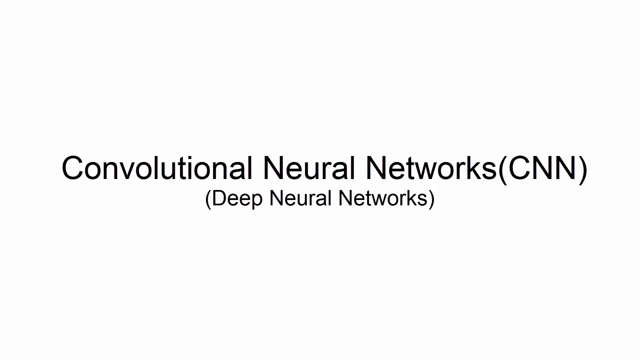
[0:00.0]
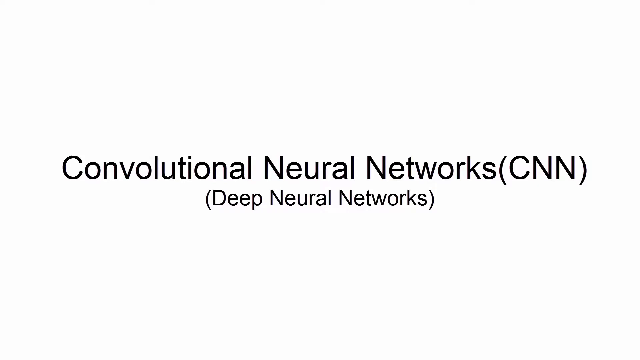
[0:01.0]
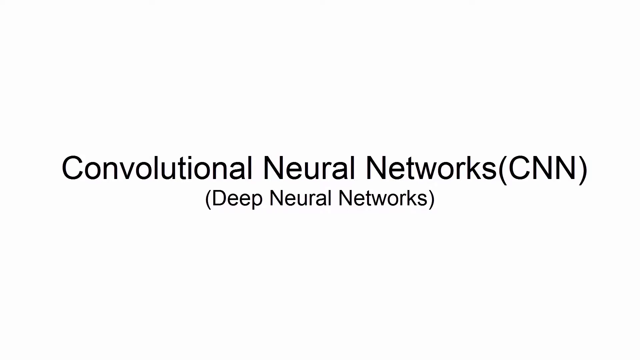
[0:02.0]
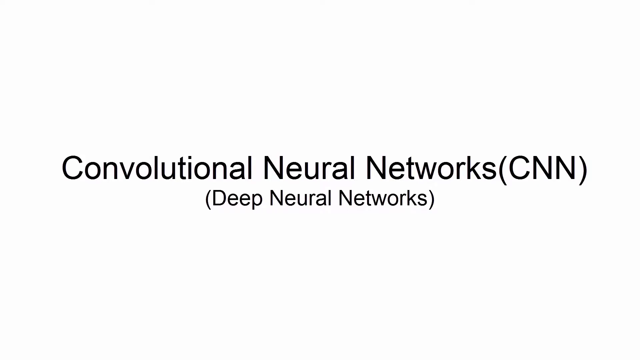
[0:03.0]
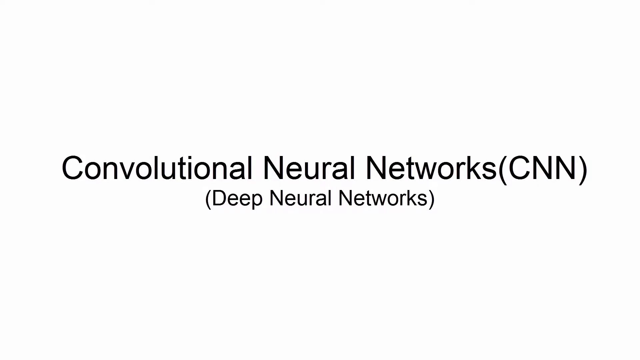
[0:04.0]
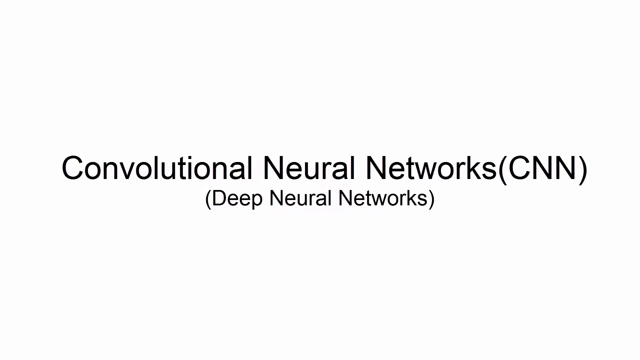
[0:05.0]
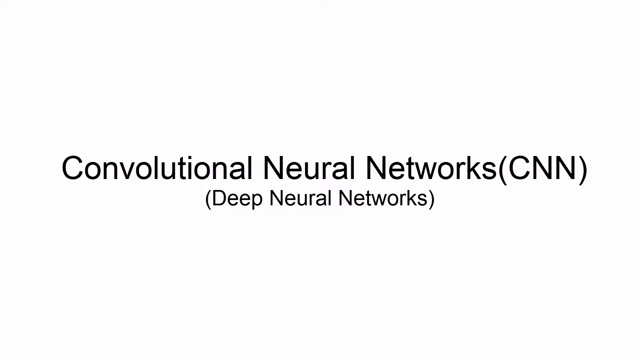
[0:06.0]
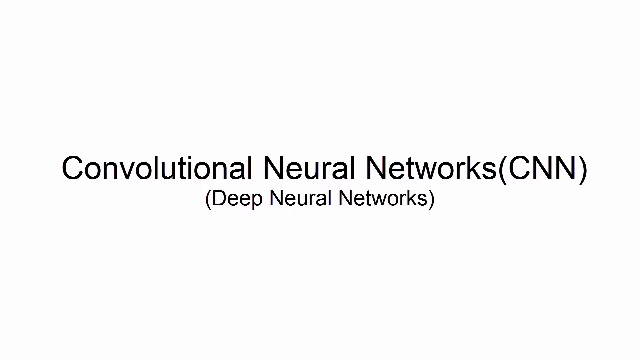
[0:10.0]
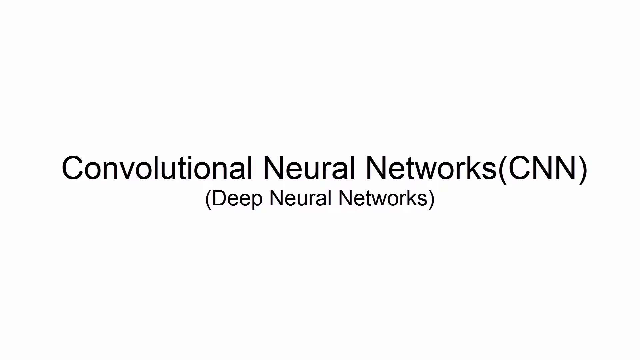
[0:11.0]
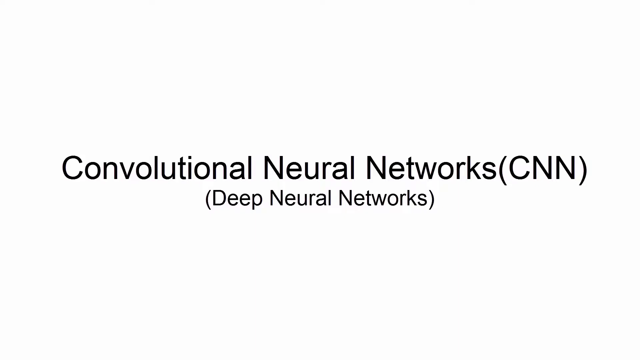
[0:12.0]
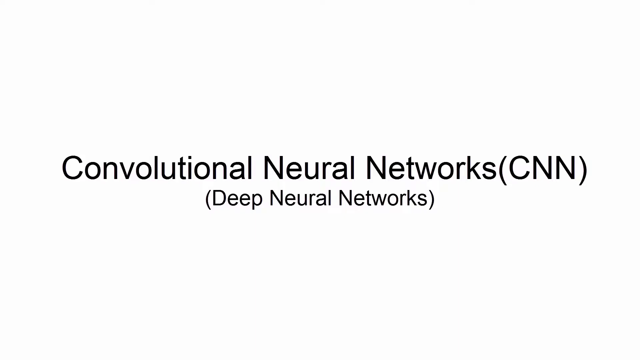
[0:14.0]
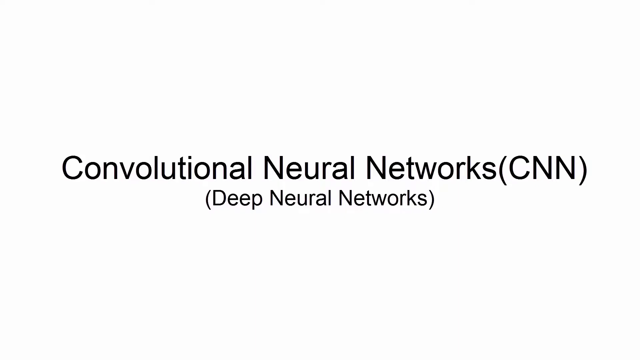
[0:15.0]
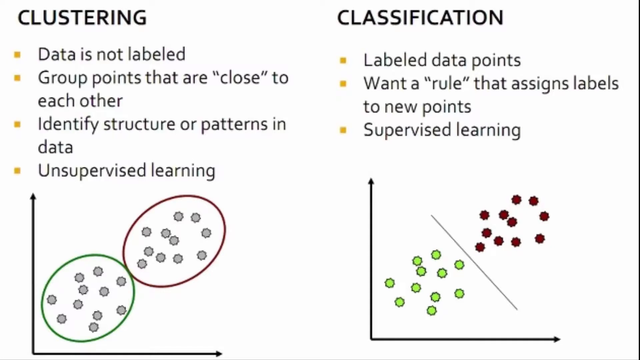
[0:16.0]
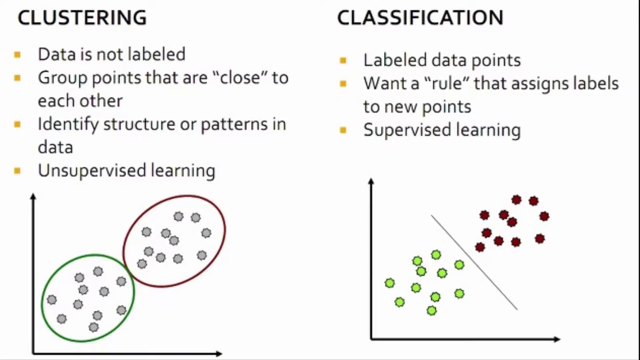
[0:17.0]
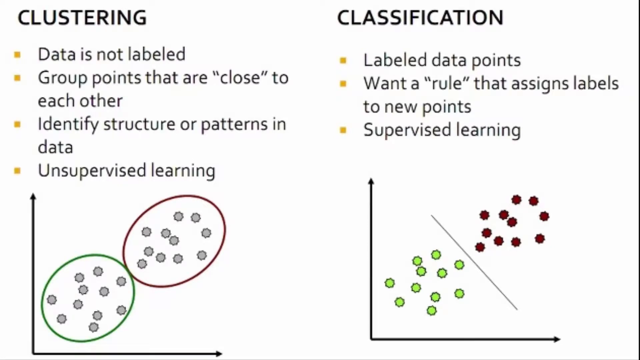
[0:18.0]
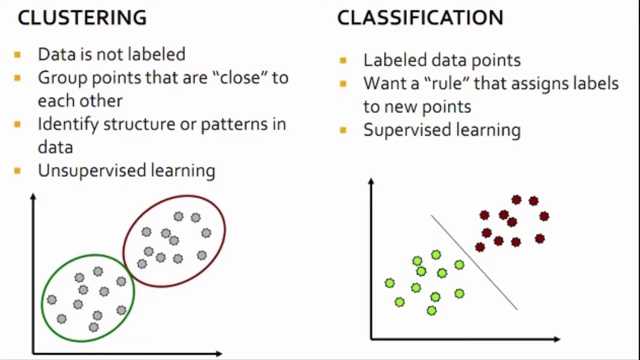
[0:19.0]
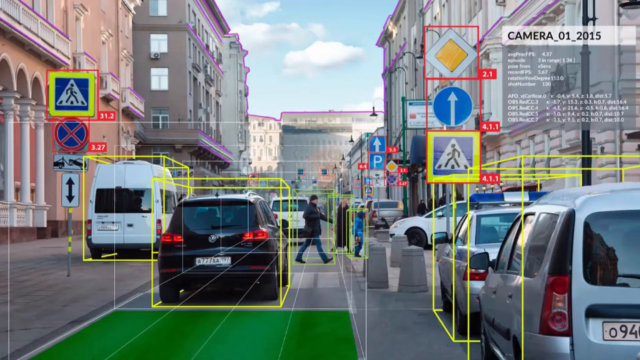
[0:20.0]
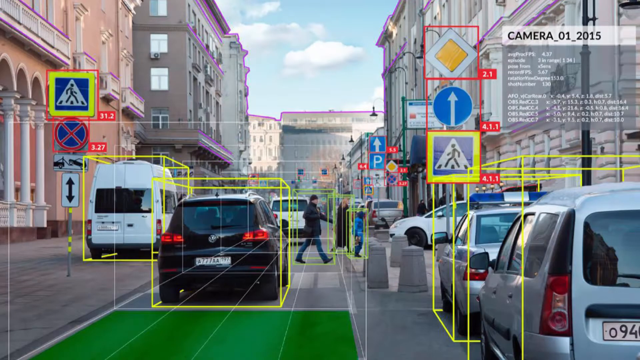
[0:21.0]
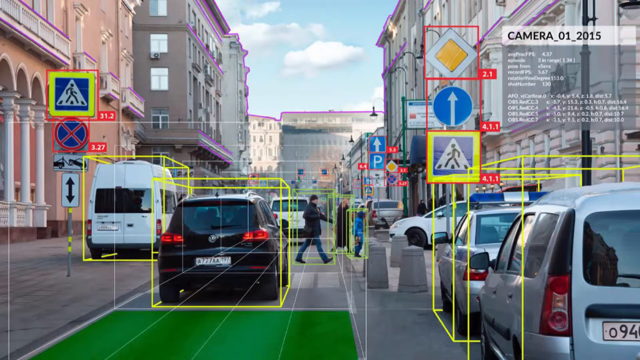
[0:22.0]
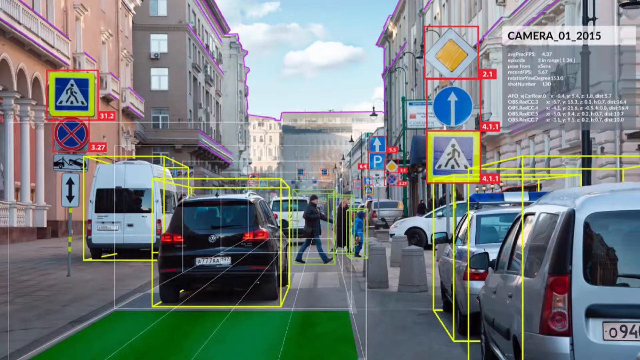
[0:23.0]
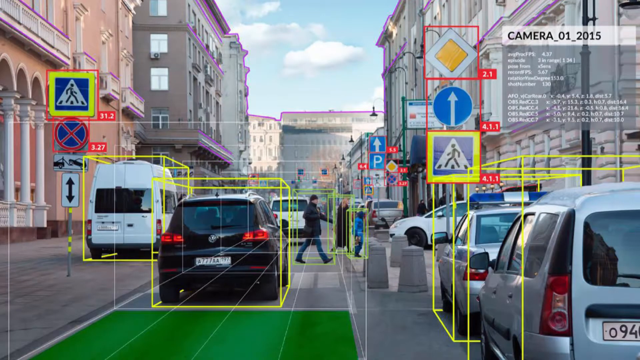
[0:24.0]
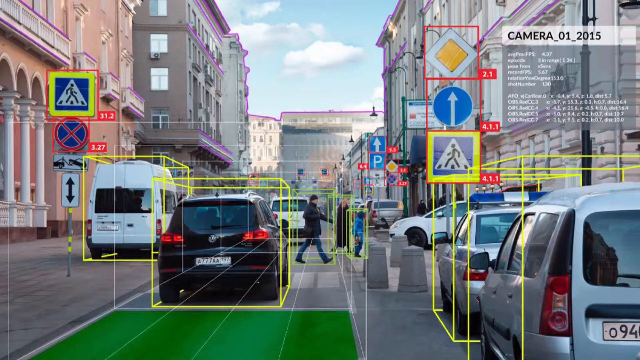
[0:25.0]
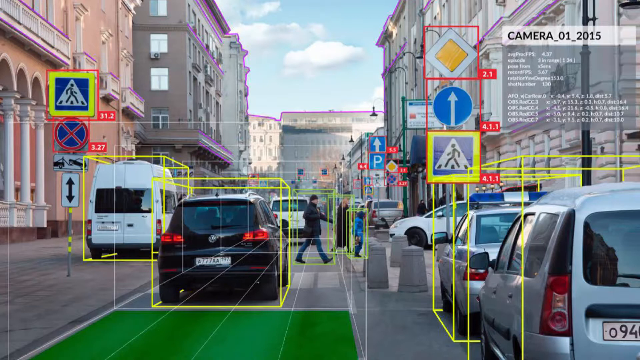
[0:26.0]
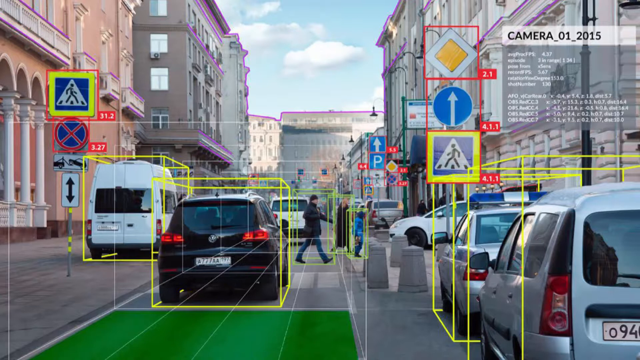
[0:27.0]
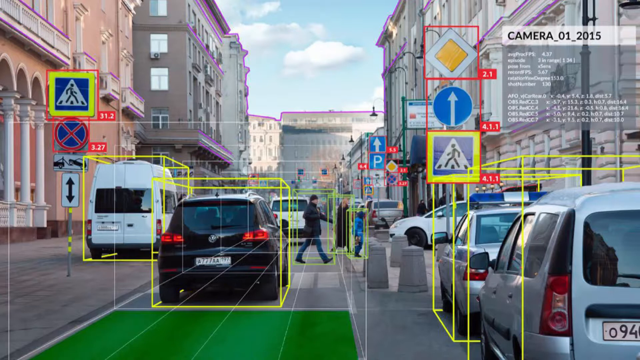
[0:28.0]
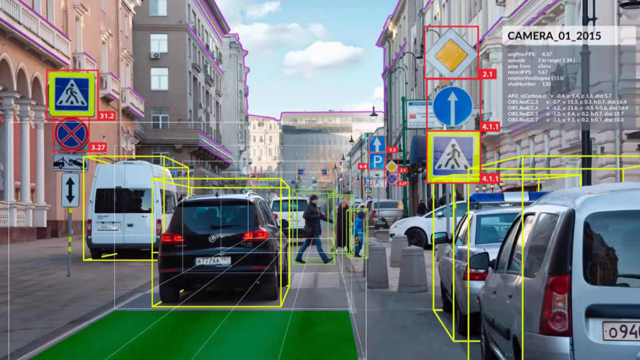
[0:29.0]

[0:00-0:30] The video begins as a PowerPoint presentation on a white background. In the center of the screen it says "Convolutional Neural Networks (CNN)", and below that "(Deep Neural Networks)". It then cuts to a new slide. On one side the slide says "clustering" along with text ending in "unsupervised learning". On the right side it says "classification", "labeled data points" and "supervised learning". Below this text are different images. On the bottom left are two circles next to each other, touching, with 10 gray dots in the left circle and 11 gray dots in the right circle. On the right side are dots split up by a line in the center between them.